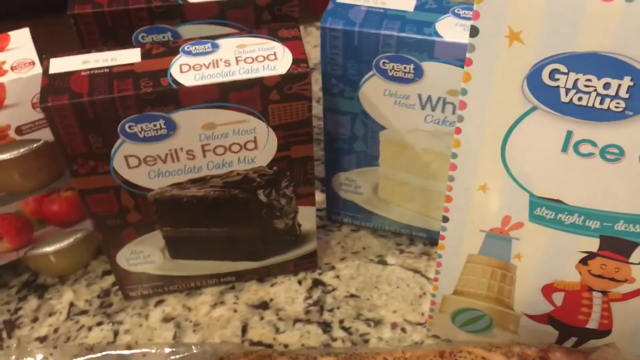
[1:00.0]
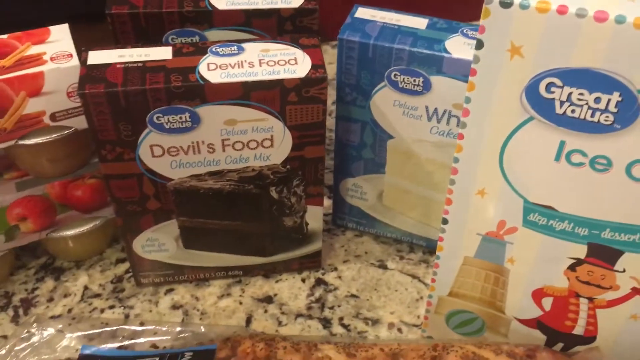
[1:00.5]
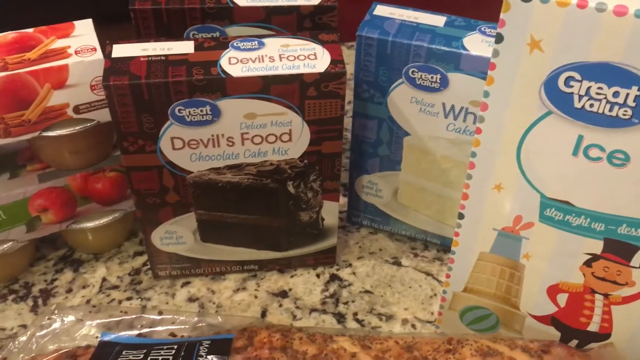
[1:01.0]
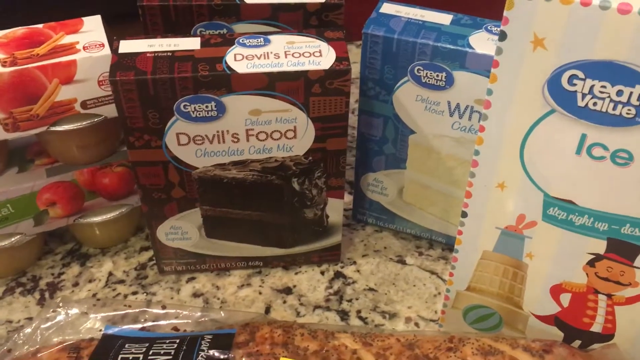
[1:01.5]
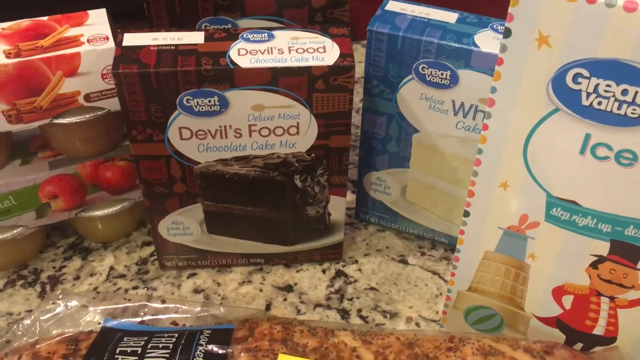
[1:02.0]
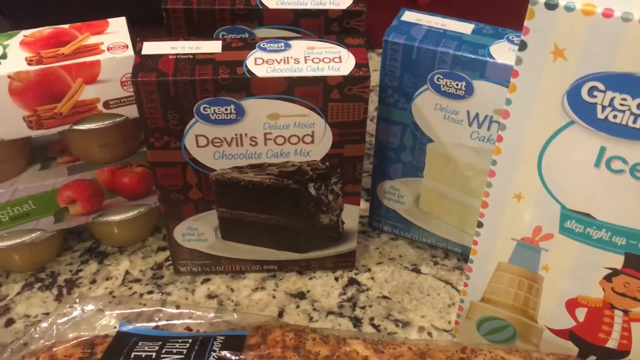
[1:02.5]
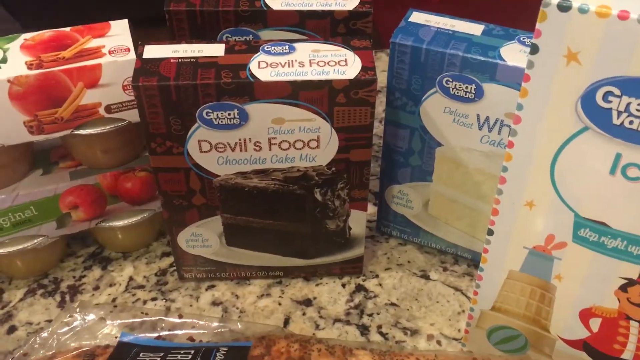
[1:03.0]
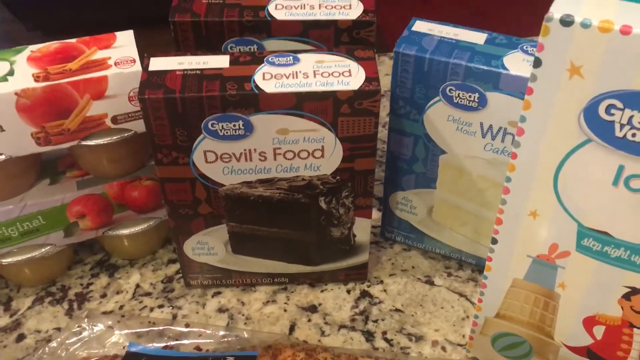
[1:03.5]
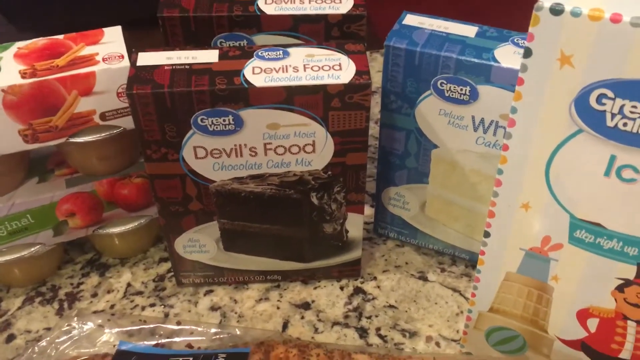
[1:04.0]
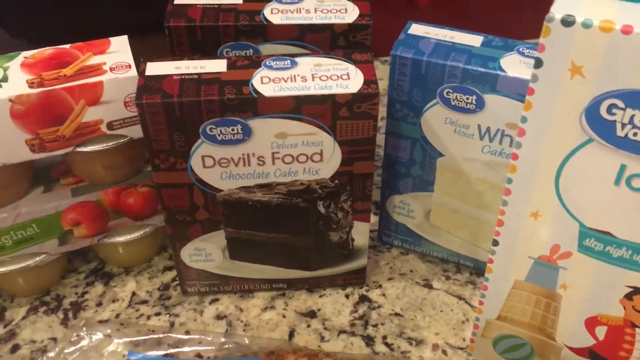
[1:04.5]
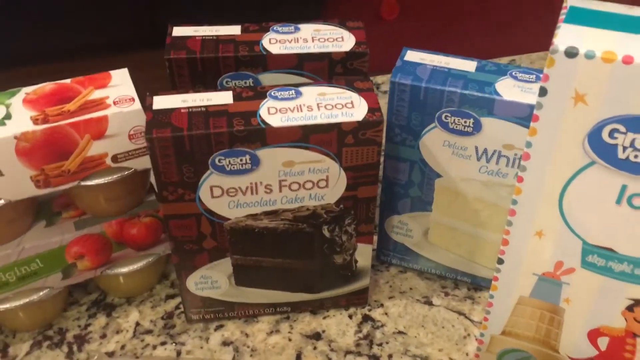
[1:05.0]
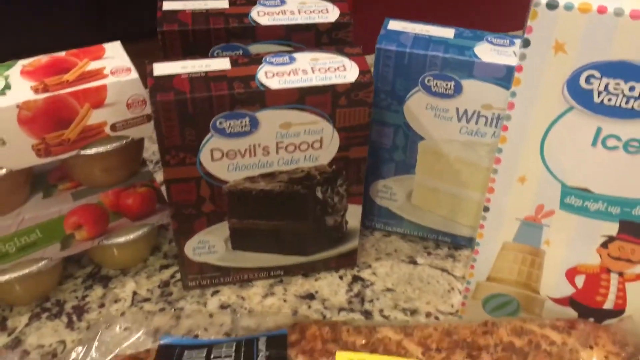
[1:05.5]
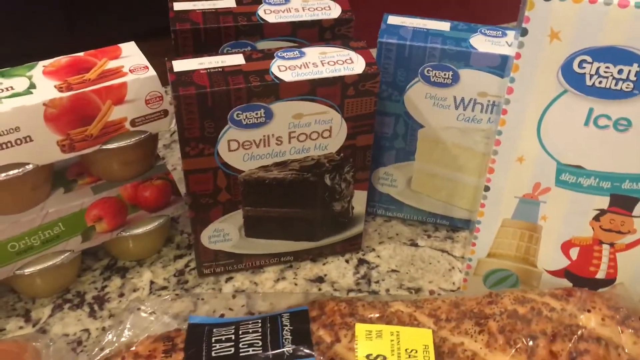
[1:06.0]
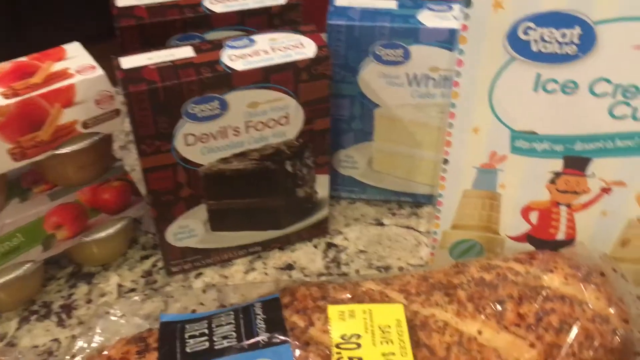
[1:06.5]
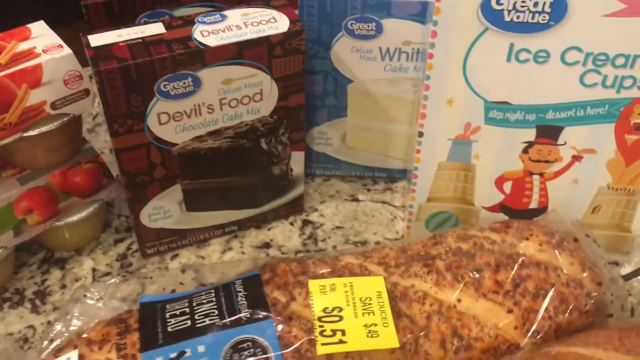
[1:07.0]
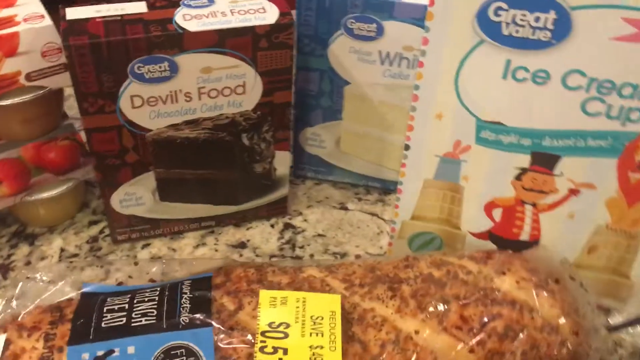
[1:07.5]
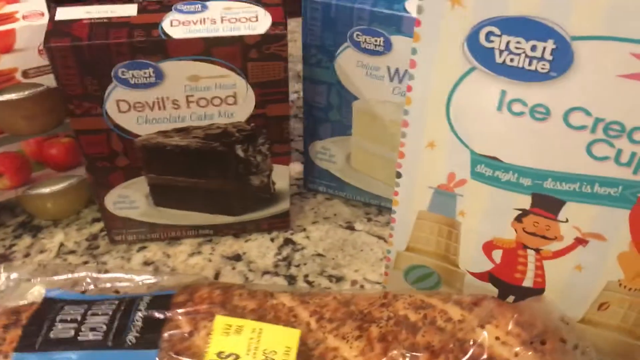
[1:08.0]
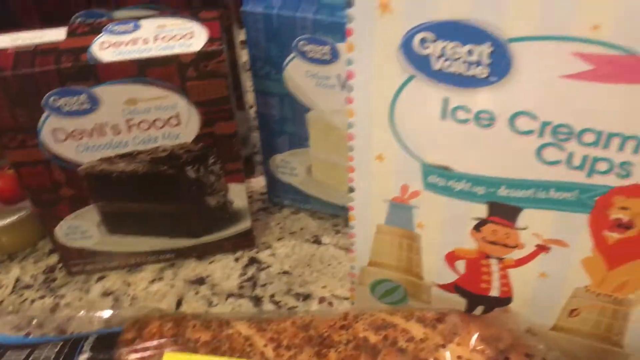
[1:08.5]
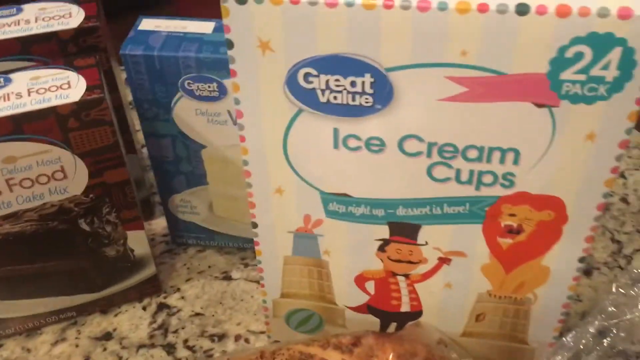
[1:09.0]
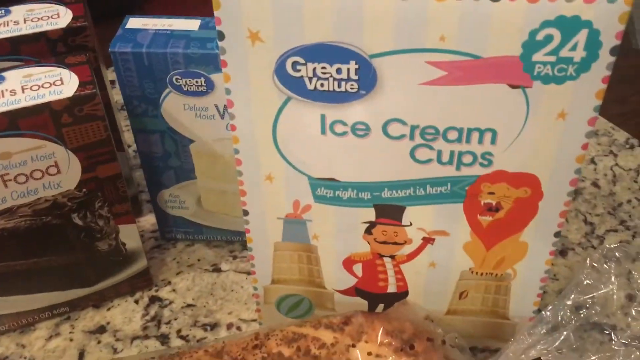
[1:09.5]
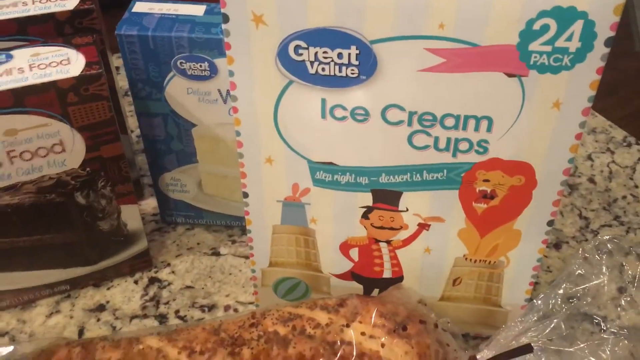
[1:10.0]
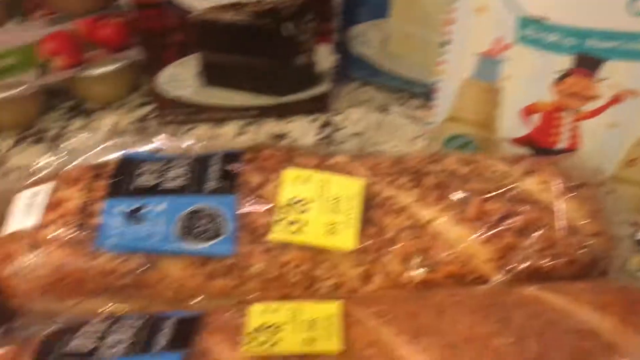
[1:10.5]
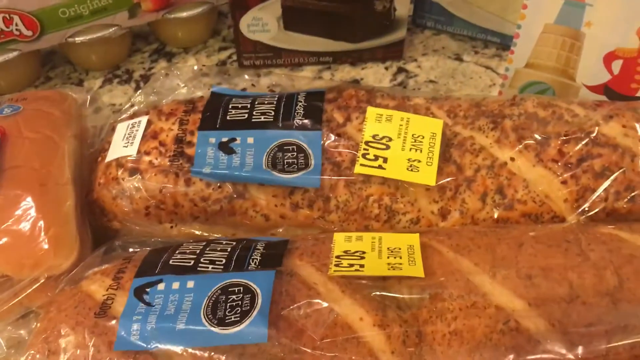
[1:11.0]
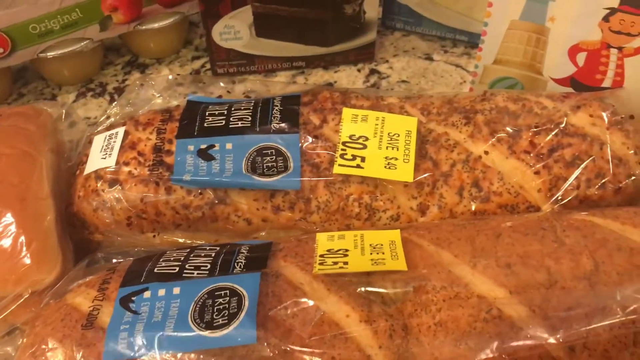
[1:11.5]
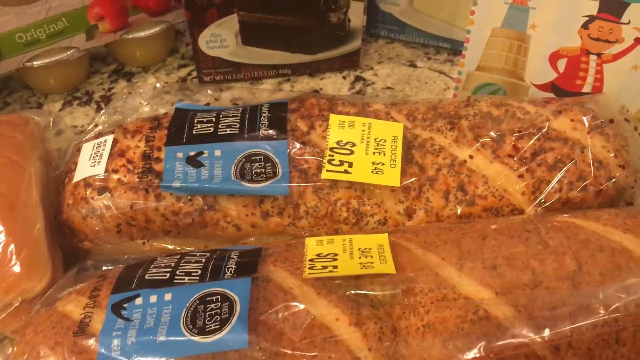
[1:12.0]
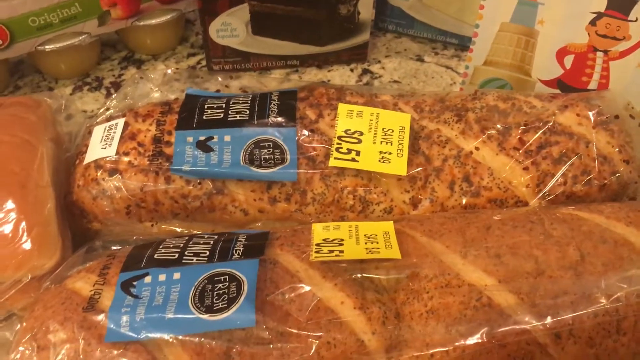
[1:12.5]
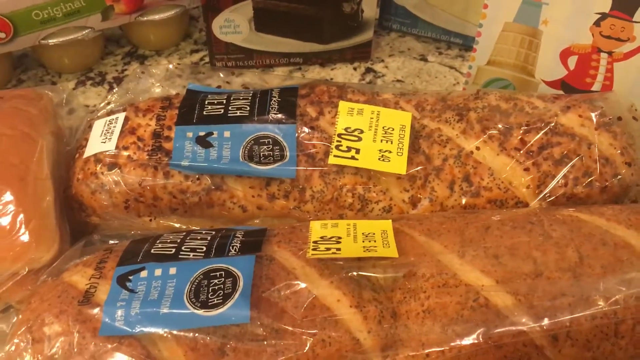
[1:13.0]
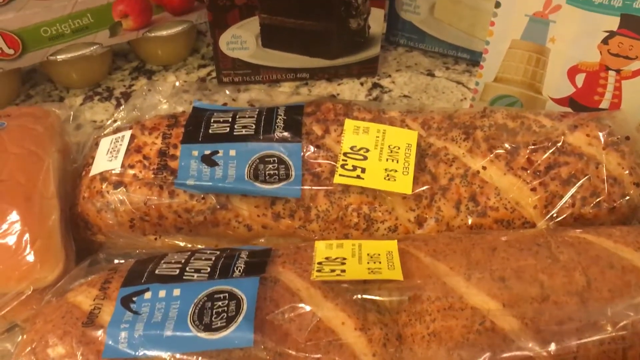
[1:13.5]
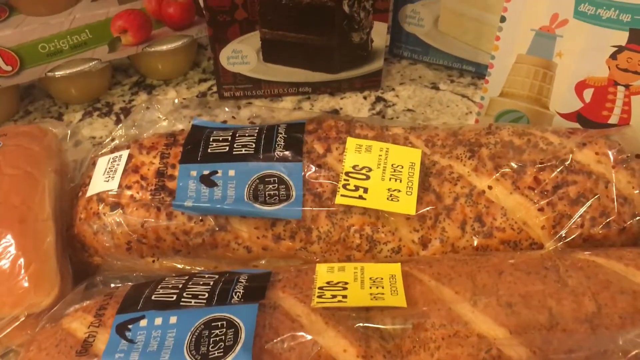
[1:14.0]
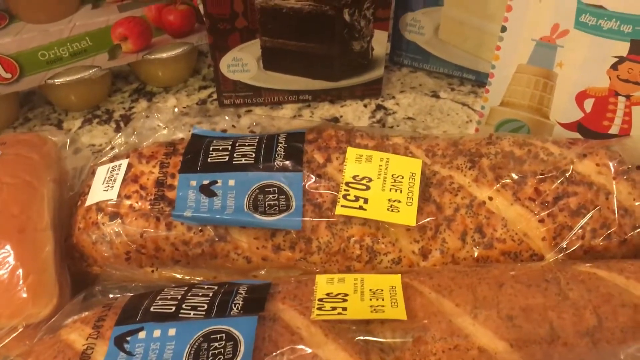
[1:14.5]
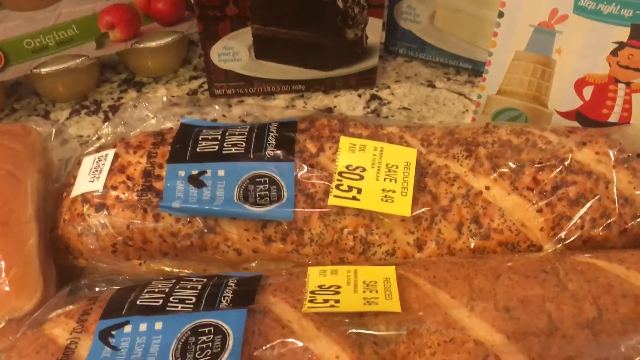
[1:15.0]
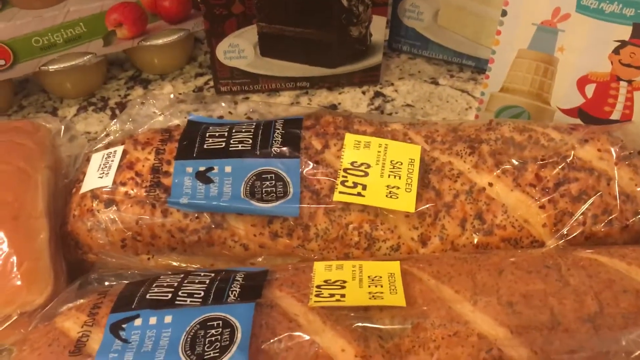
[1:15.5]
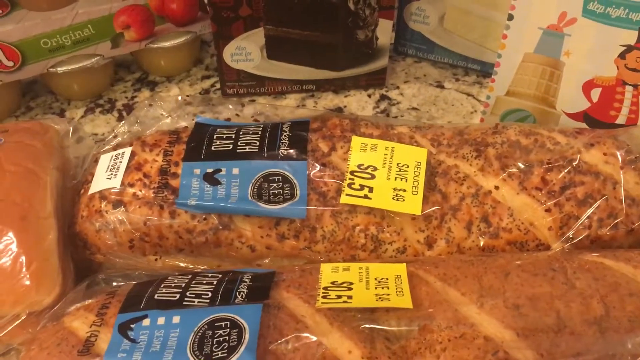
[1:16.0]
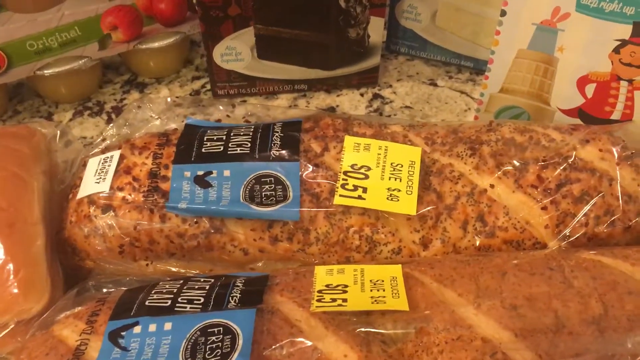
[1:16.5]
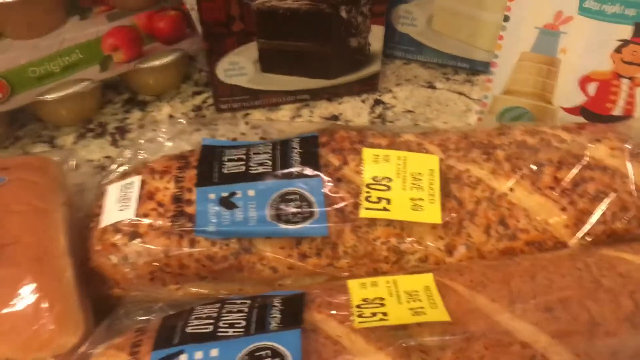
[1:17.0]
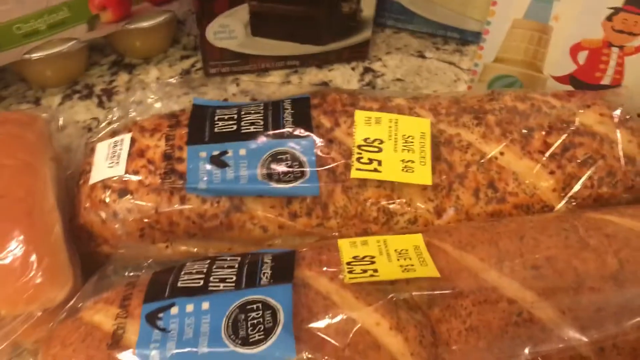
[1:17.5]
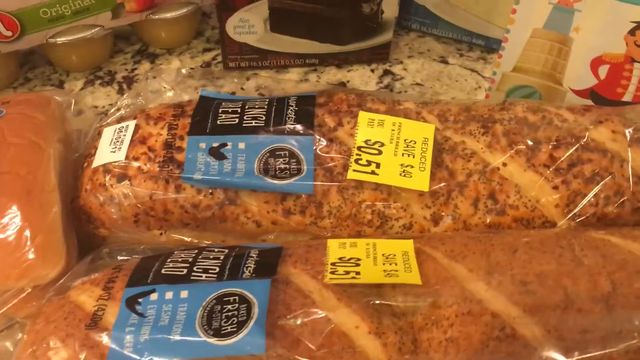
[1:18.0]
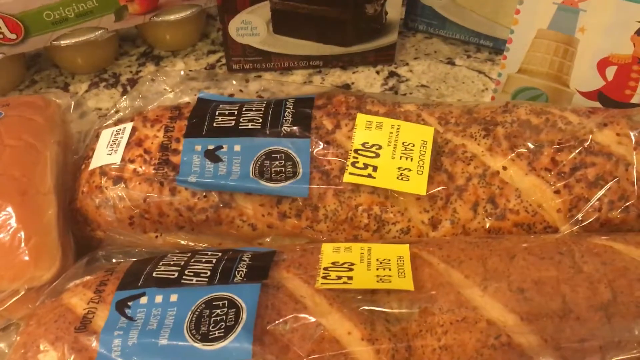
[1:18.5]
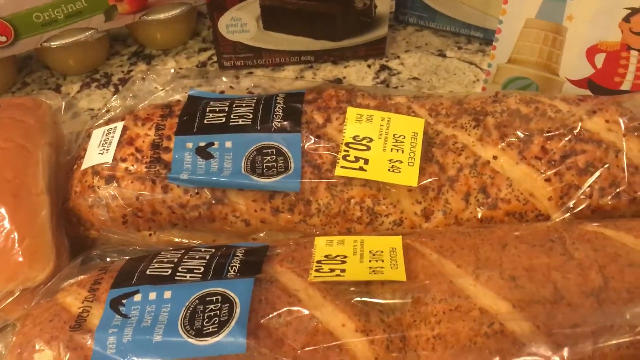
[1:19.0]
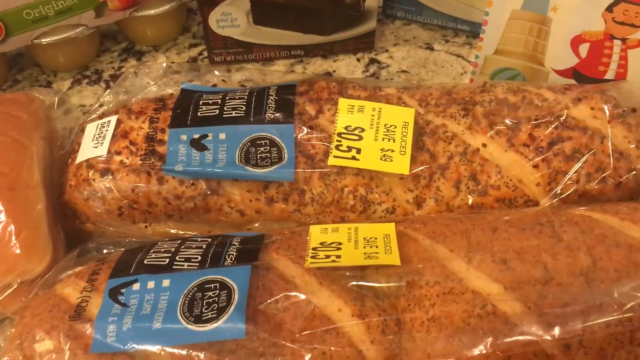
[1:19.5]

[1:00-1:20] What seems to be a grocery haul from Walmart is laid out on top of a kitchen counter. On the left-hand side are two cartons, or two six-packs, of applesauce. In the middle are two boxes of moist deluxe devil's food chocolate cake mix in brown and red packaging with a white and blue logo, with a picture of a thick, moist chocolate cake on a white plate on the front. To the right of the chocolate cake mix is a blue and white box of vanilla deluxe moist white cake, with an image of a thick slice of moist vanilla cake on a white plate on the front. A box of ice cream cups shows on its front that it is a 24-pack. There are two loaves of bread in transparent plastic bags with a black and blue logo on the front that says "fresh"; the price of the bread is 51 cents per loaf.